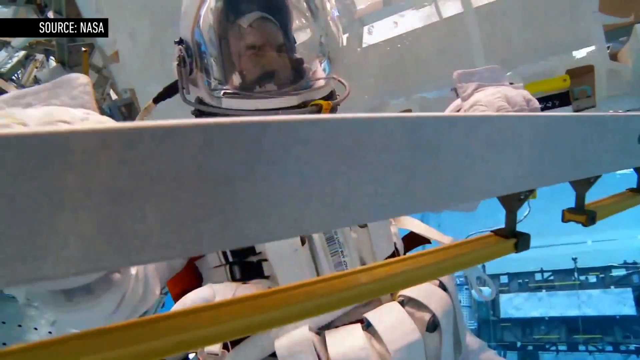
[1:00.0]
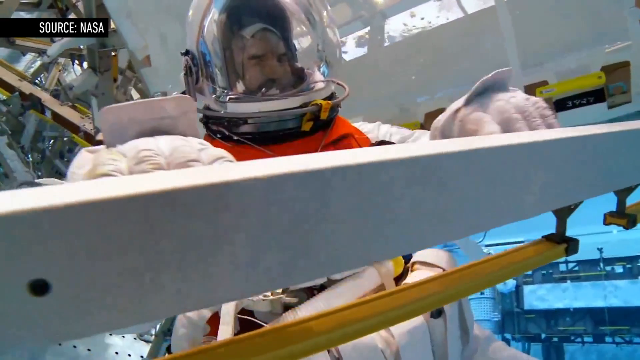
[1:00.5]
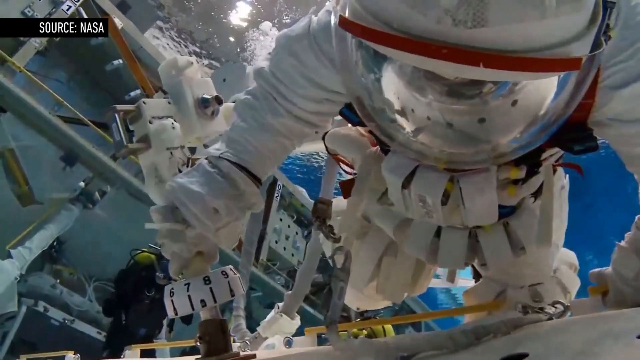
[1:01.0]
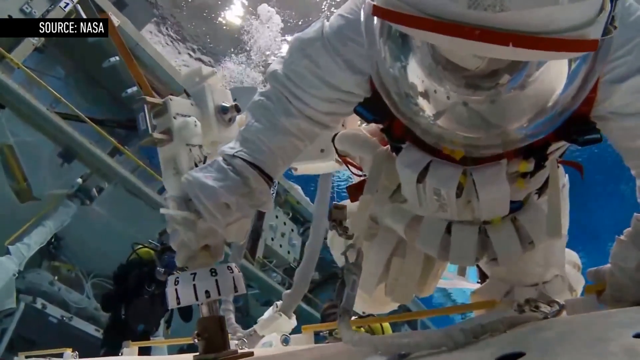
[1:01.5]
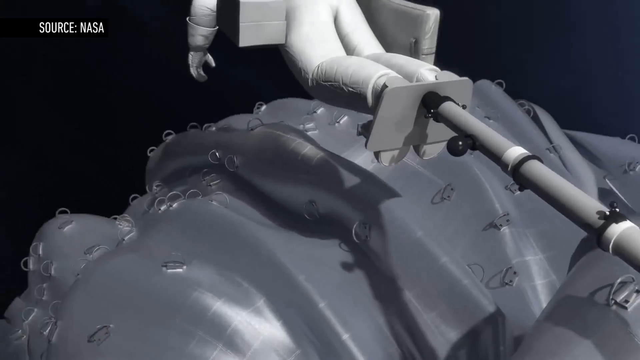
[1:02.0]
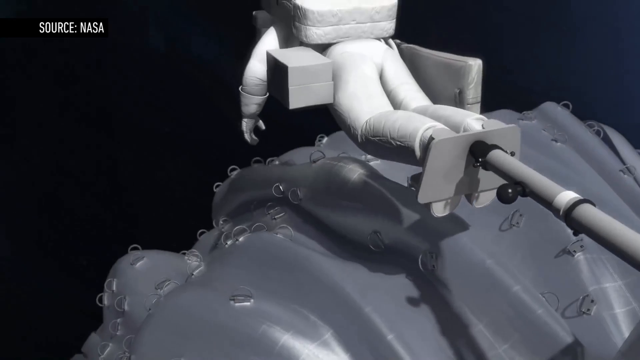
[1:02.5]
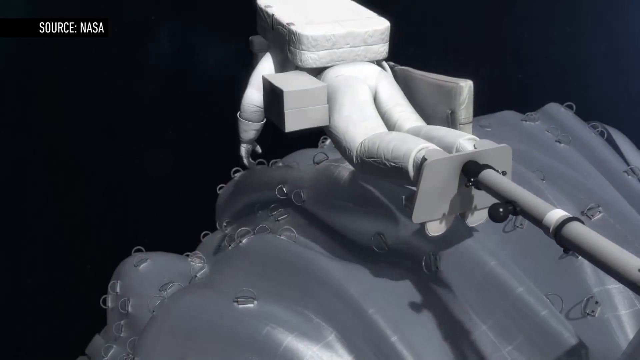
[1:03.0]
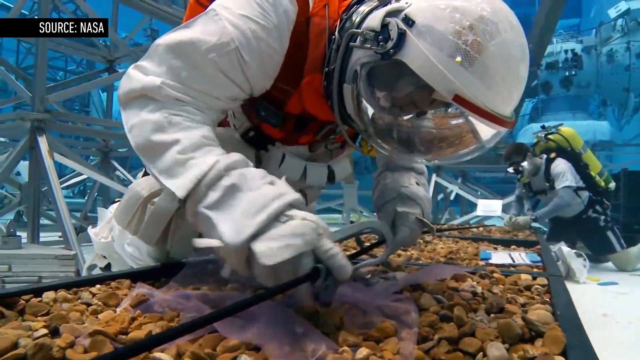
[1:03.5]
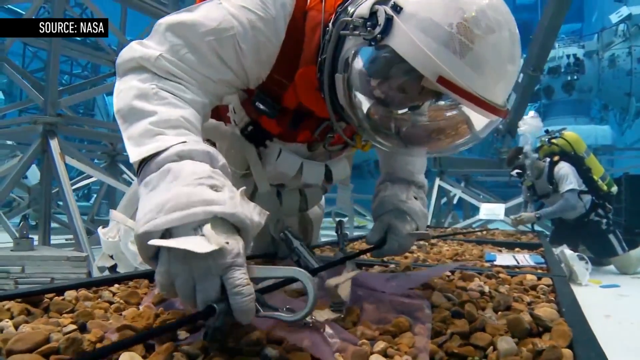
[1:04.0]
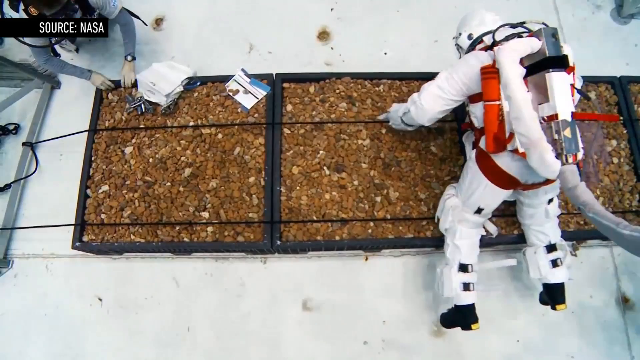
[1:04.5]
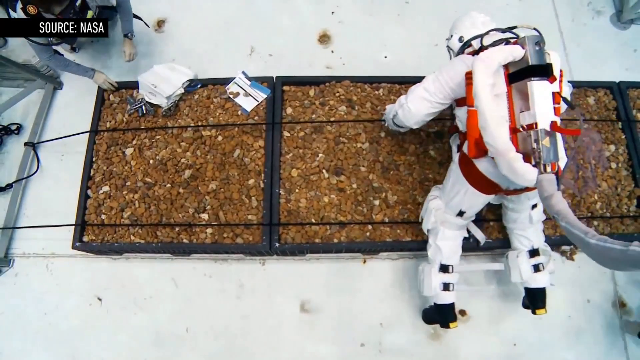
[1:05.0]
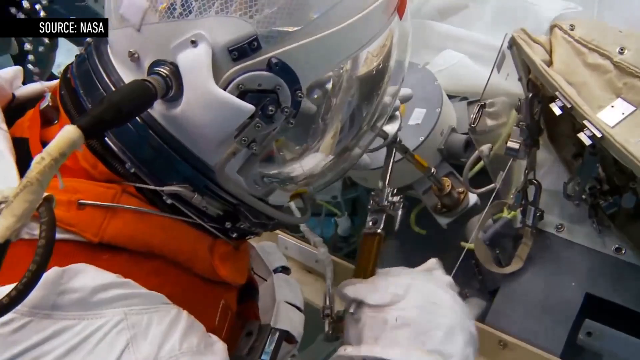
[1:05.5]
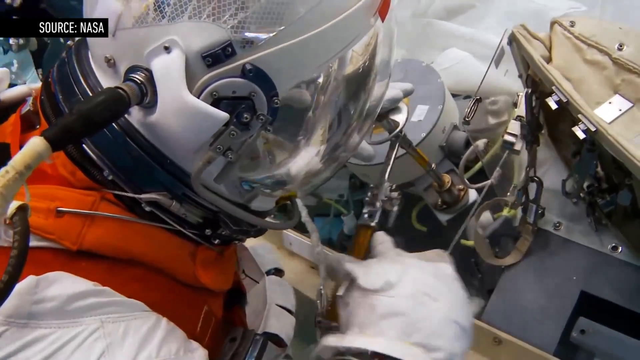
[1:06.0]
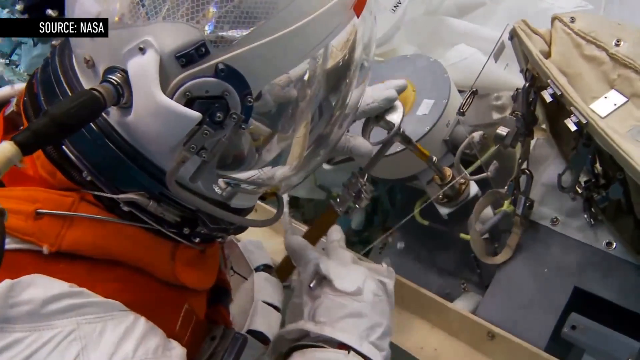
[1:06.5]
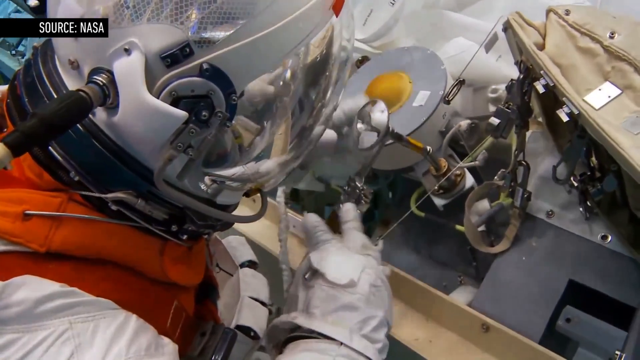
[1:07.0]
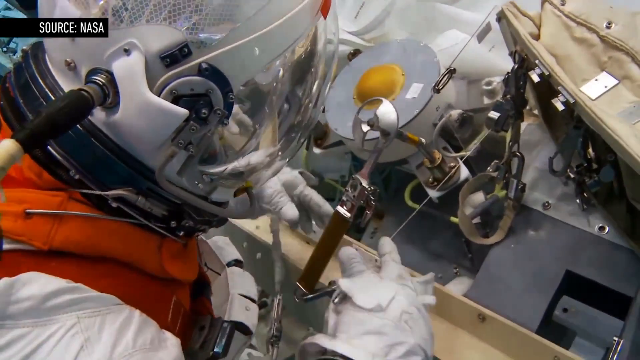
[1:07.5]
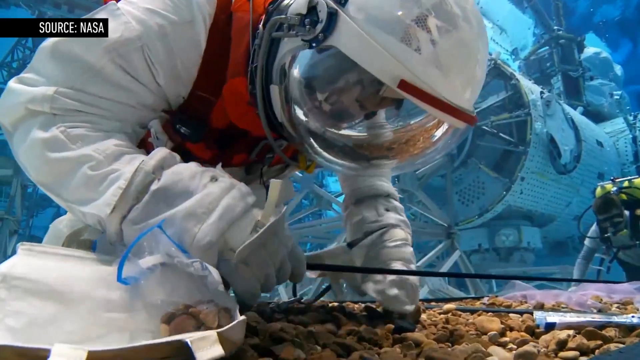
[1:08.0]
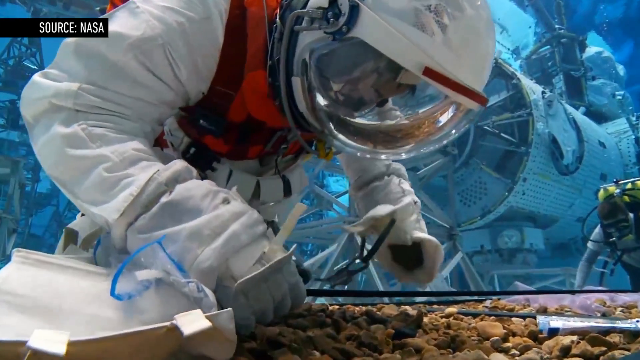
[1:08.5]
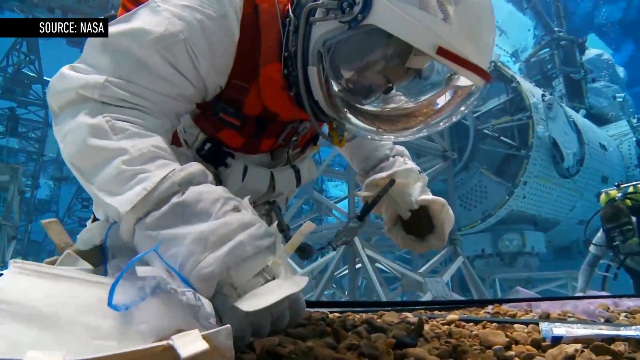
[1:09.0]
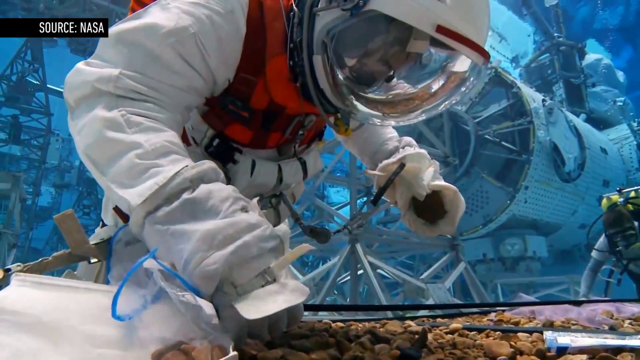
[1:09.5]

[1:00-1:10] The same astronaut is shown, still hard to make out, but he seems to be underwater doing something with a metal tube. Another scene shows more clearly that he is under the sea, working with some very strange tools. A 3D model sequence shows an astronaut climbing a spaceship in the middle of nowhere. Then the same real astronaut is seen under the sea, laying plants that are also under the sea, and a diver with oxygen on his back does the same. The plants are difficult to make out from this angle and distance.